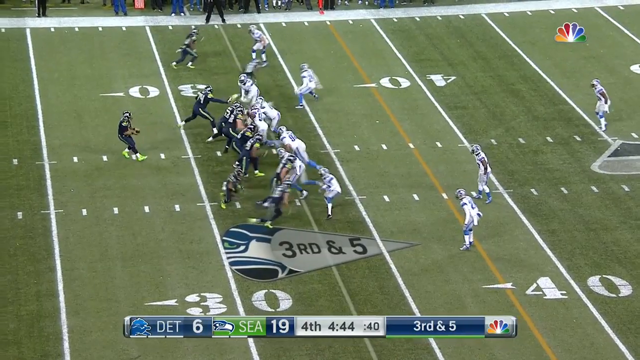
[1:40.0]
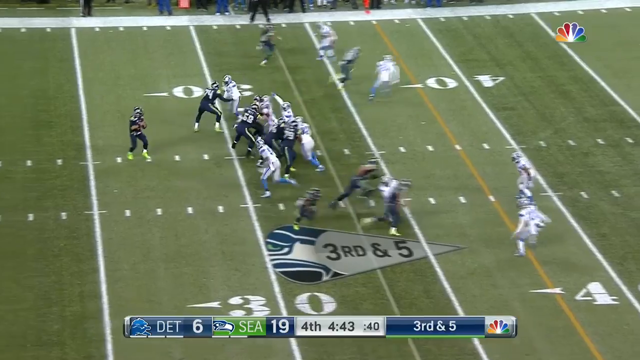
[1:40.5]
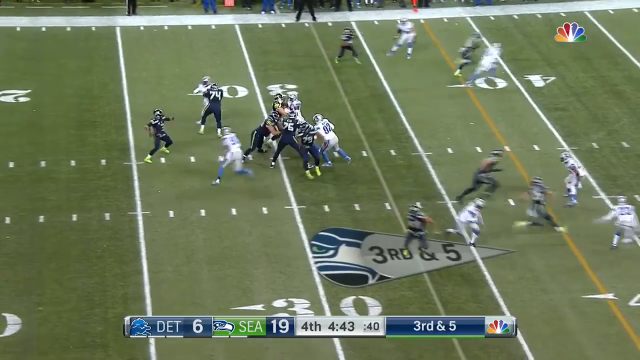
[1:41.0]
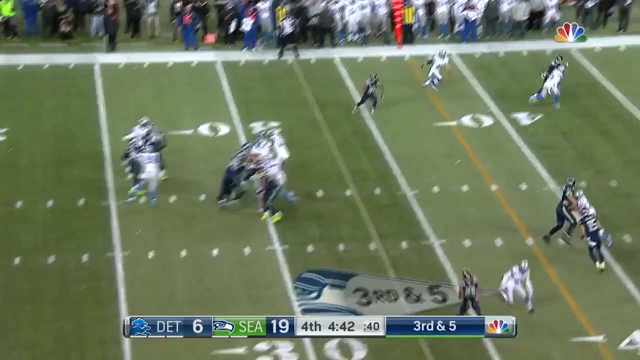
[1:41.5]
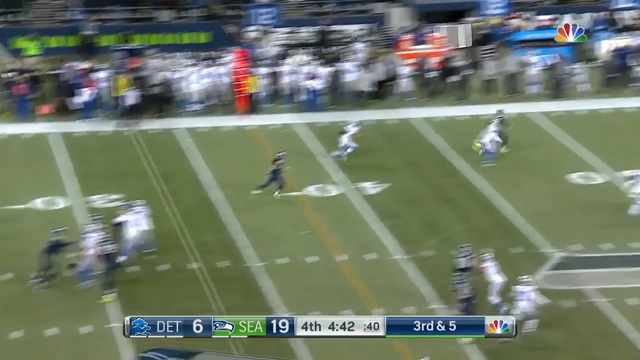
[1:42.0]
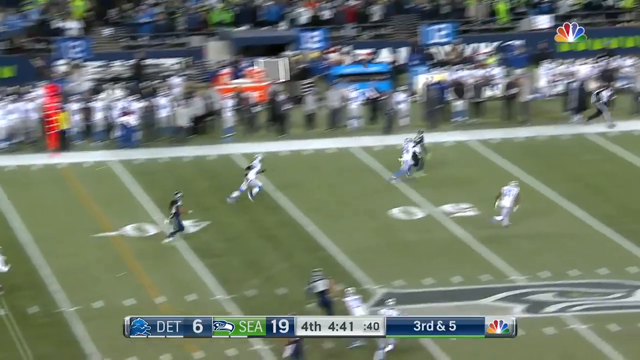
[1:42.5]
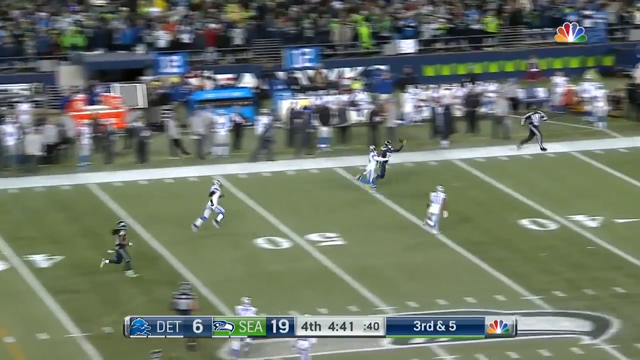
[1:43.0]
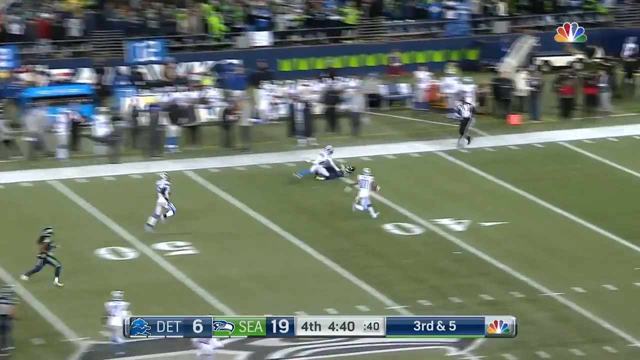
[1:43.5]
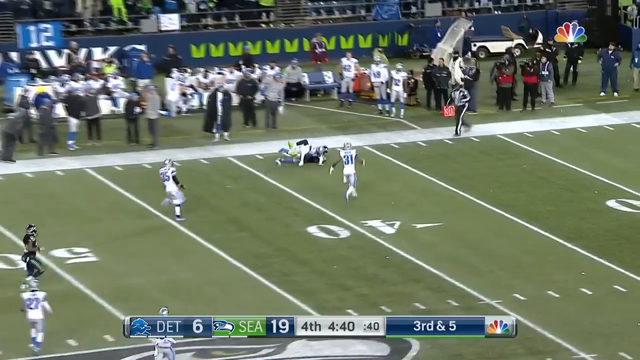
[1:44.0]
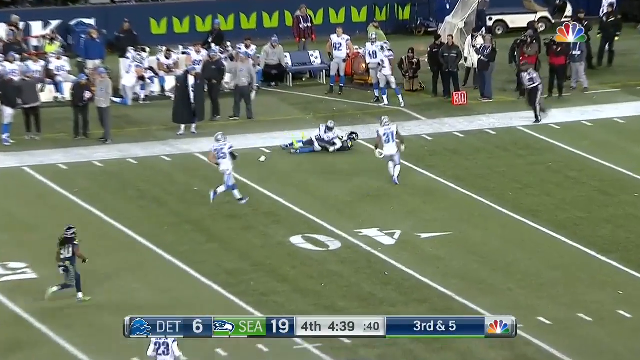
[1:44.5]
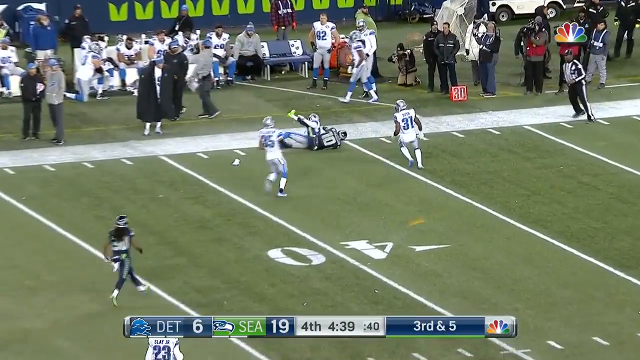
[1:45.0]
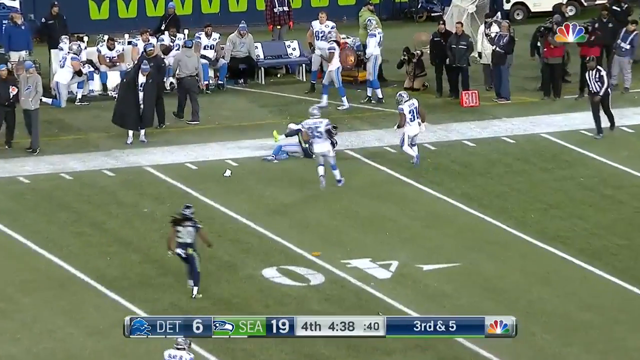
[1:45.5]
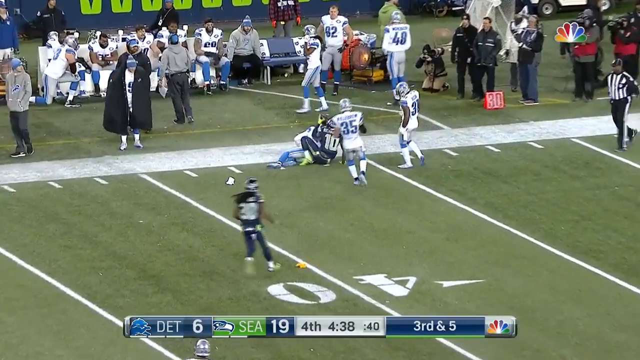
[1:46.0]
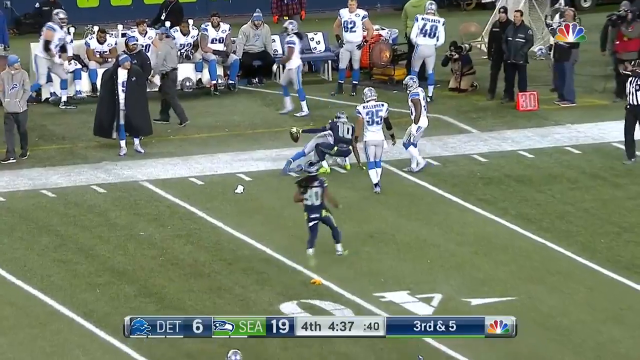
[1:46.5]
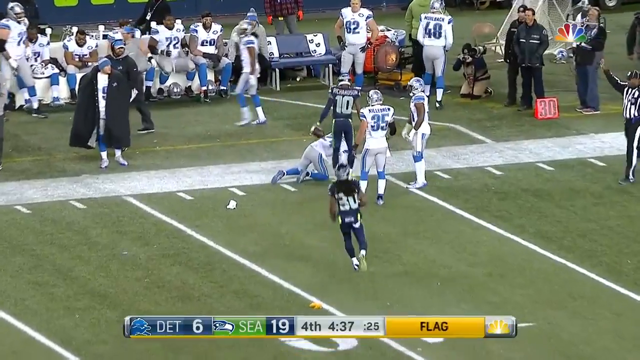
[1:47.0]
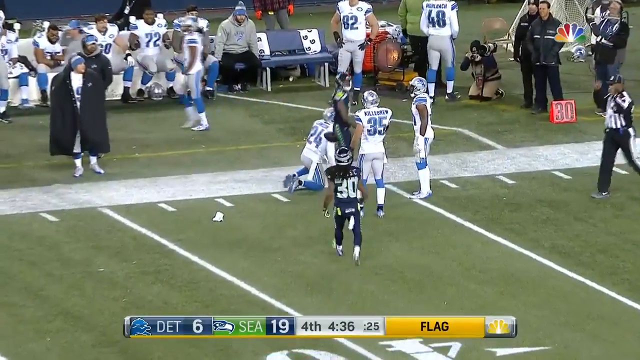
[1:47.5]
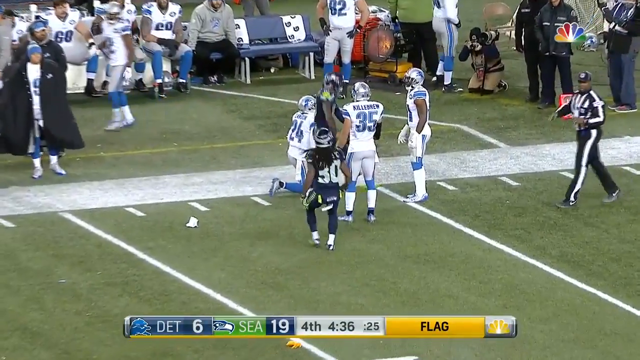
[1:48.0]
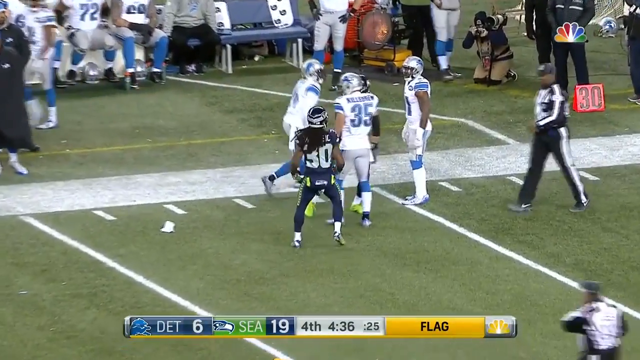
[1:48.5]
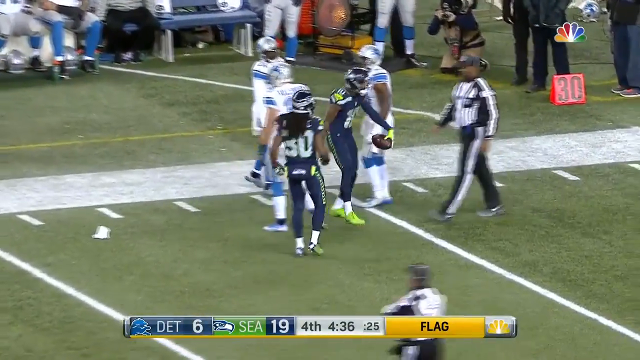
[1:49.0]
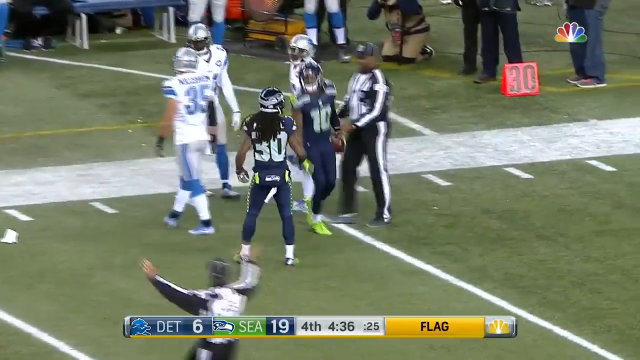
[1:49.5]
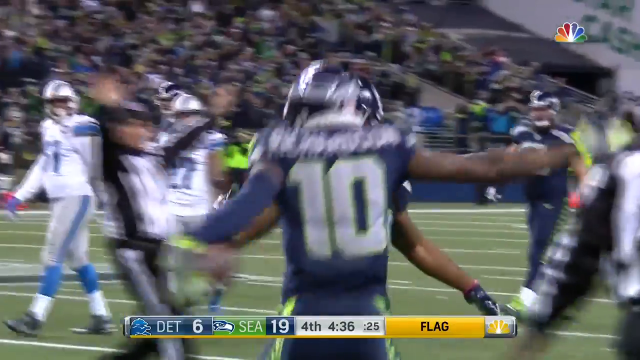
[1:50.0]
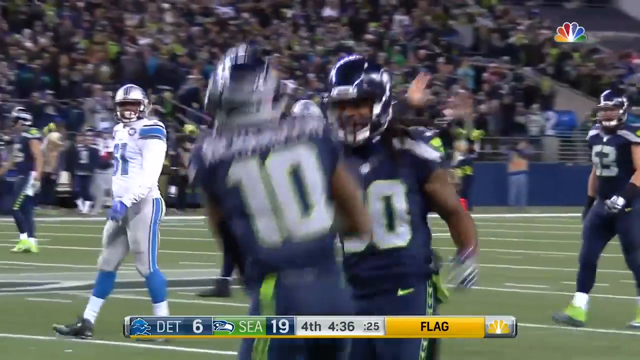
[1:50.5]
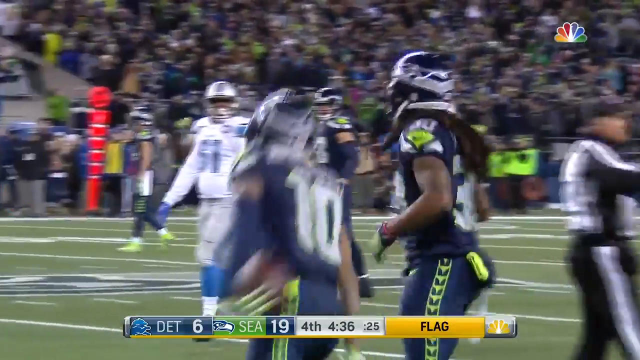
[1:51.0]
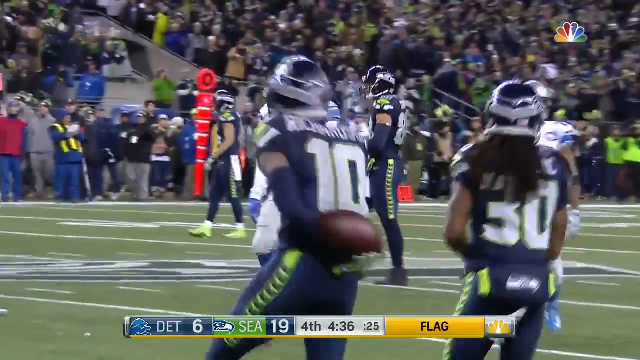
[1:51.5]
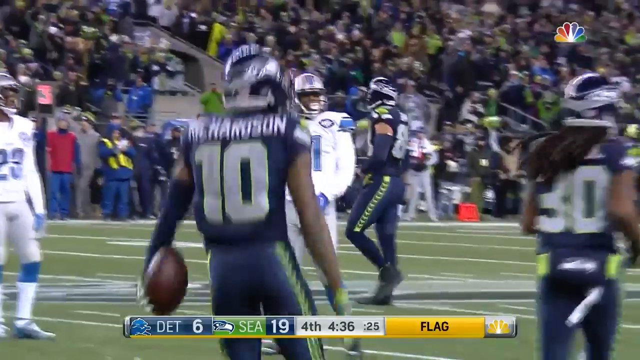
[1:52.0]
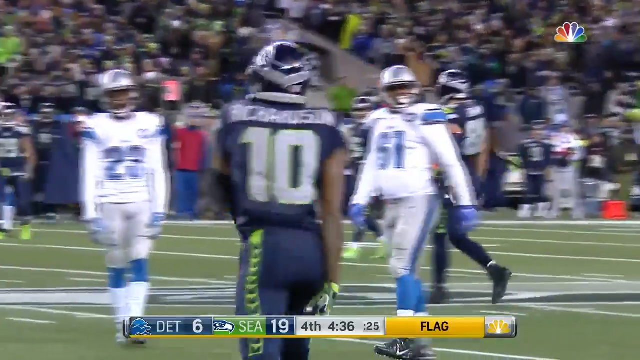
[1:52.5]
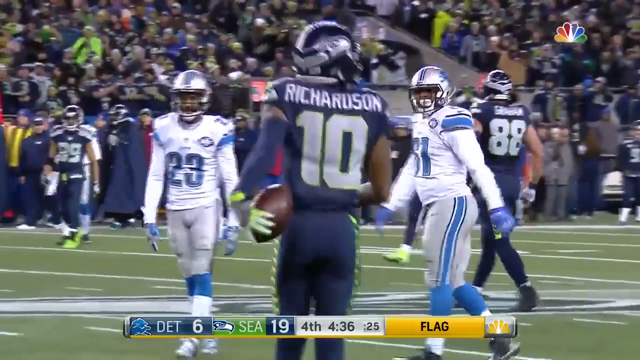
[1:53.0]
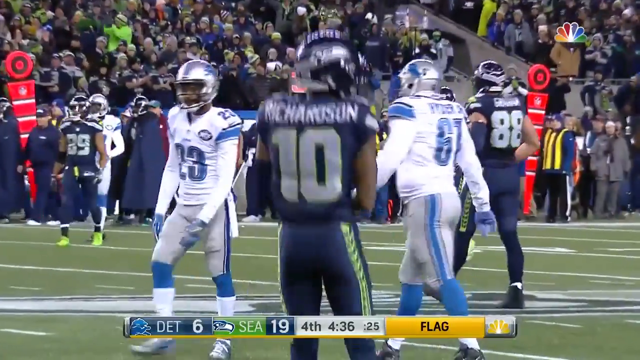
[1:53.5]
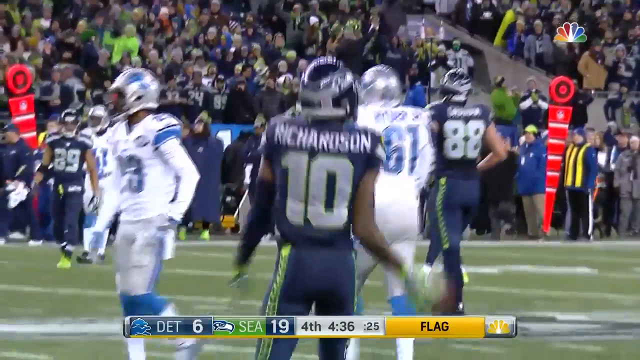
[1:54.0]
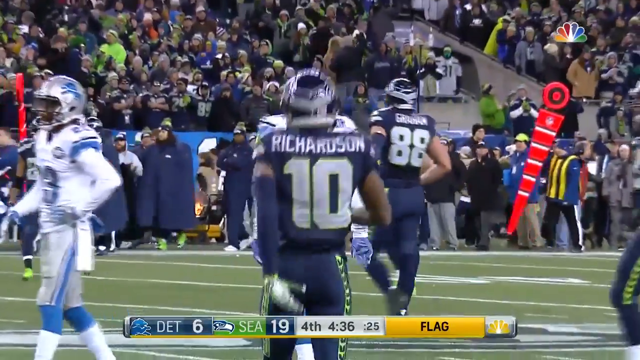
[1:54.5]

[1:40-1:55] Seahawks quarterback Russell Wilson drops back and throws as two Lions rushers close in. The pass goes to a Seahawks wide receiver streaking down the field a couple of steps ahead of a Lions player, who makes a one-handed catch right at the opposing team's 40-yard line and secures it as the Lions player falls into him. The receiver is Richardson, number 10, who made the two earlier catches. A referee throws a yellow flag, indicating a penalty. Richardson gets up first, and Lions number 24, who was beaten on the other play, gets up last. Richardson jumps around with the ball on his left side and high-fives a teammate, number 30, and is then shown from behind dancing.